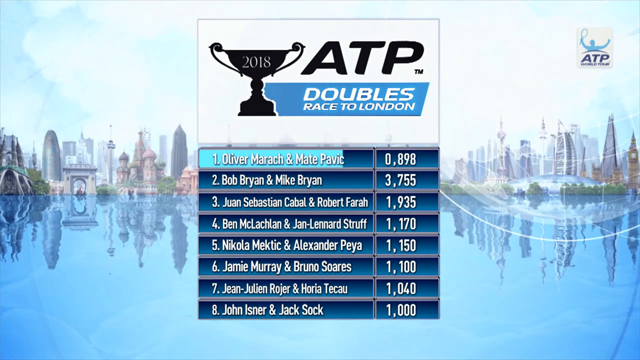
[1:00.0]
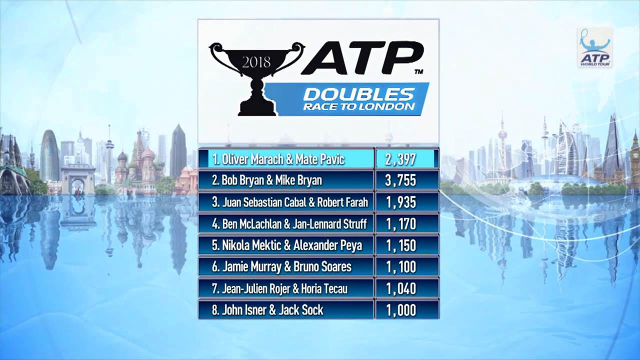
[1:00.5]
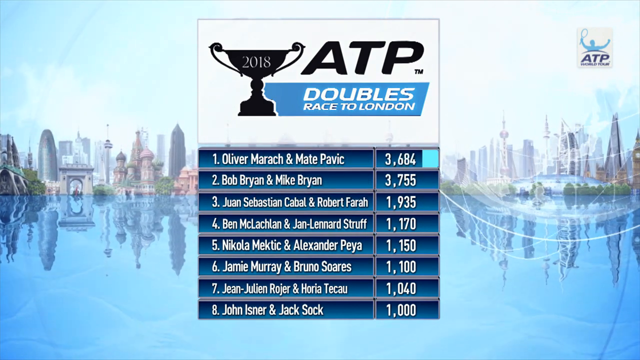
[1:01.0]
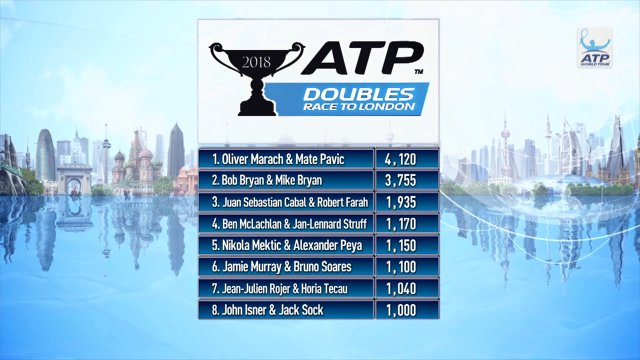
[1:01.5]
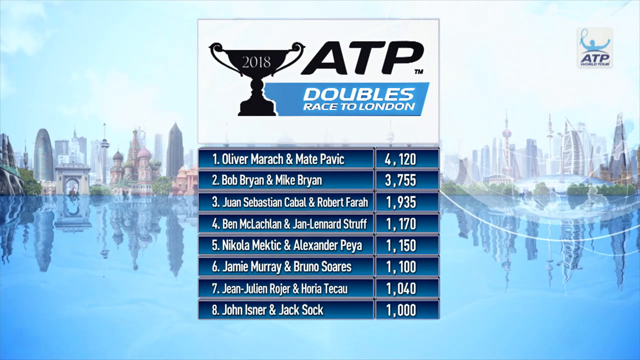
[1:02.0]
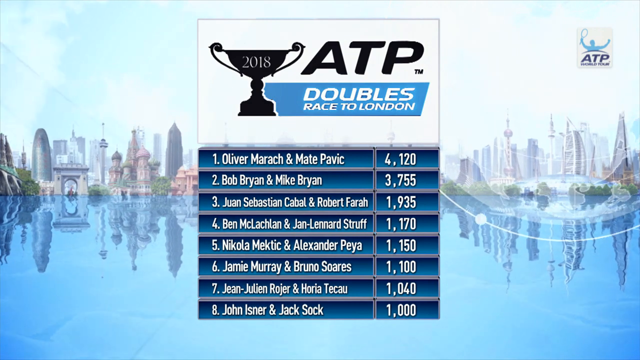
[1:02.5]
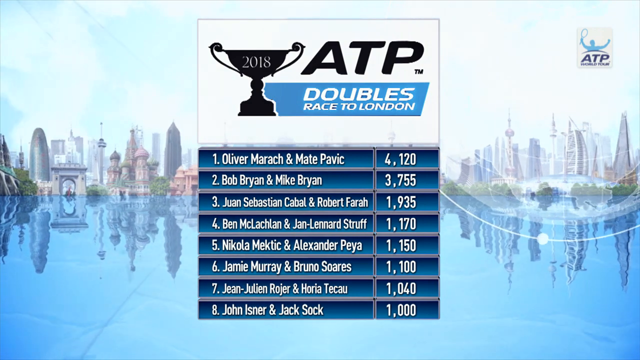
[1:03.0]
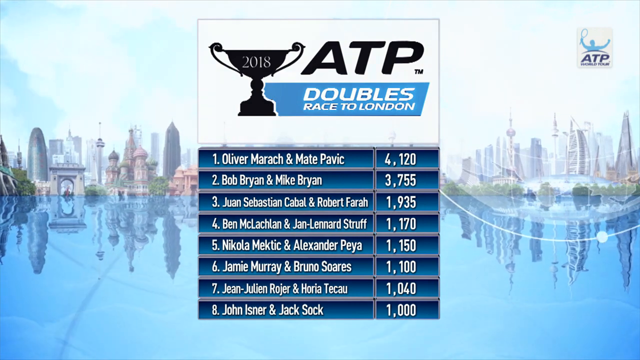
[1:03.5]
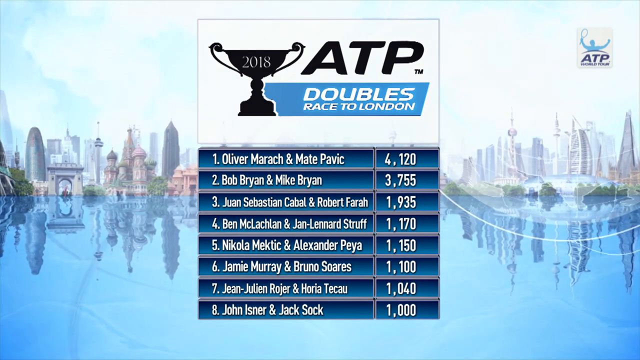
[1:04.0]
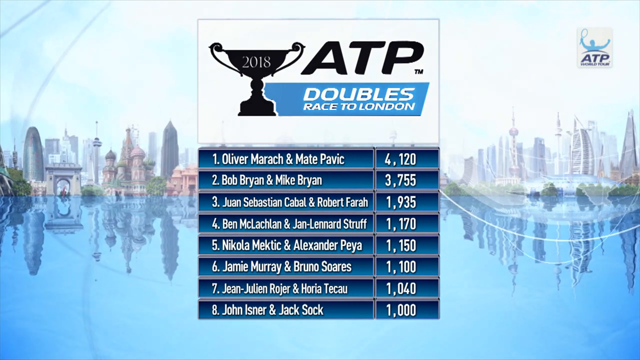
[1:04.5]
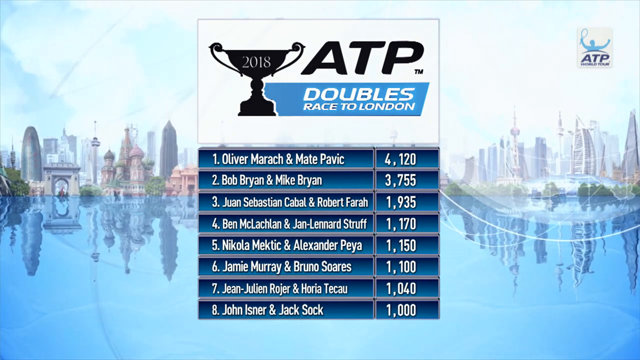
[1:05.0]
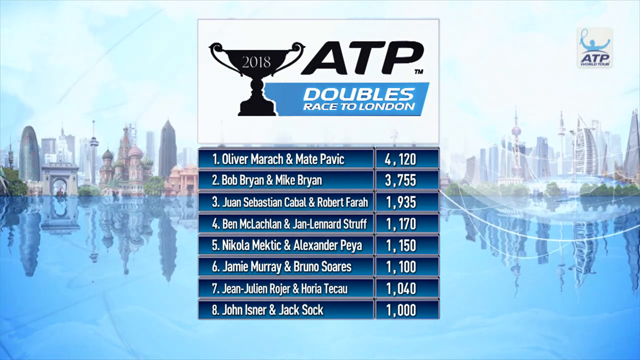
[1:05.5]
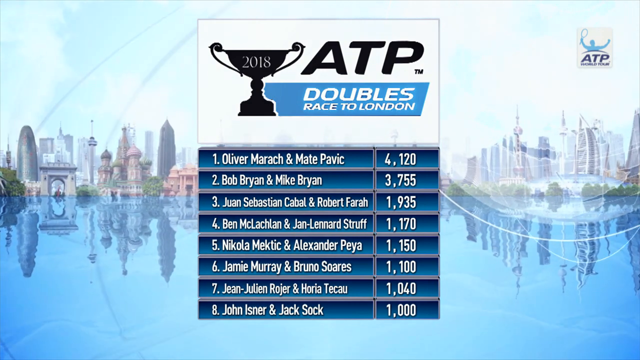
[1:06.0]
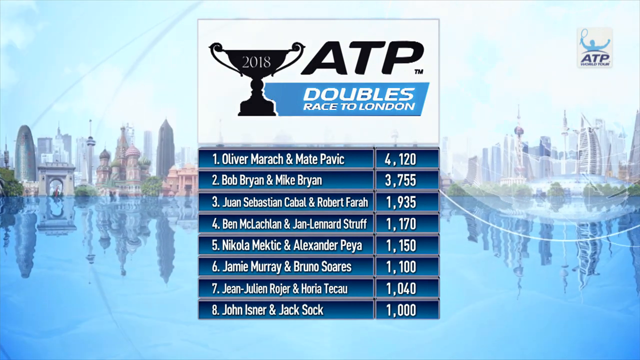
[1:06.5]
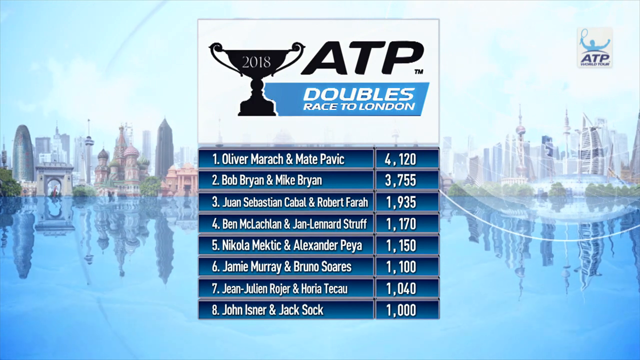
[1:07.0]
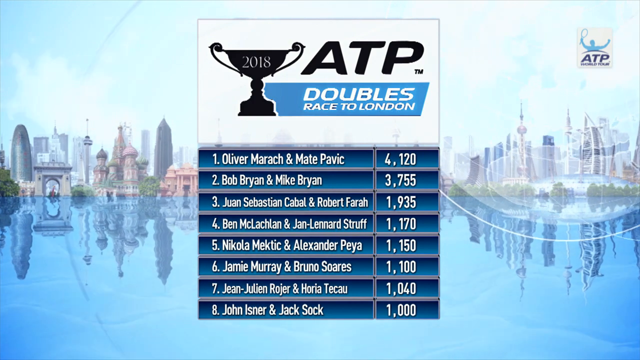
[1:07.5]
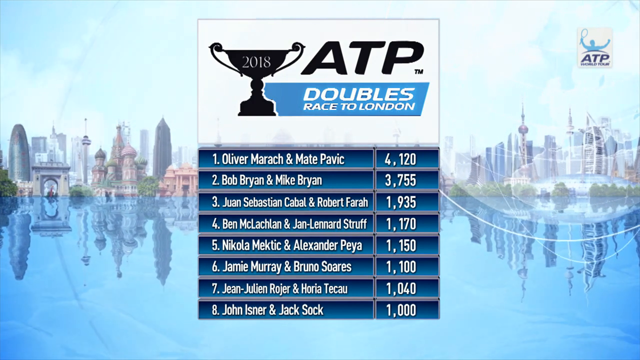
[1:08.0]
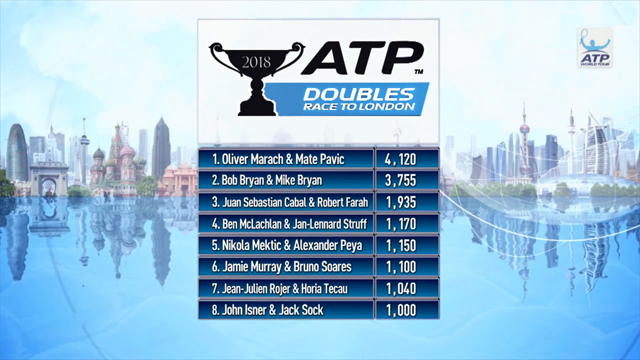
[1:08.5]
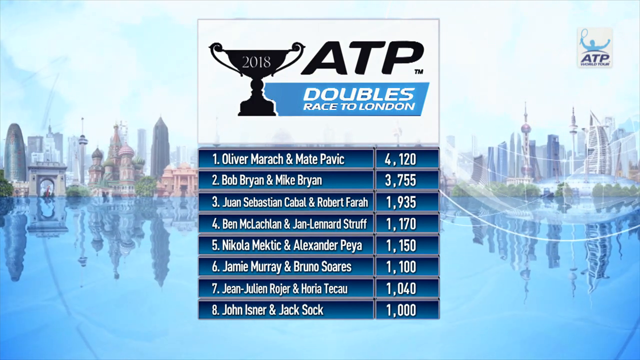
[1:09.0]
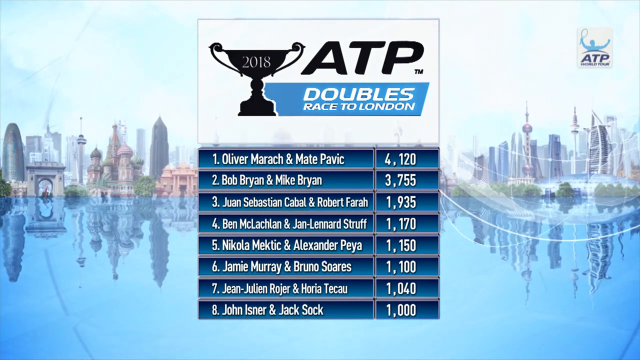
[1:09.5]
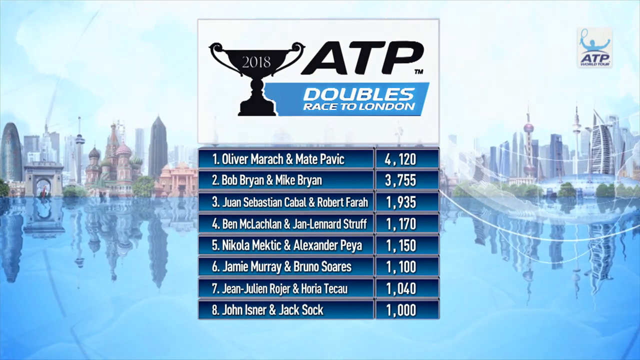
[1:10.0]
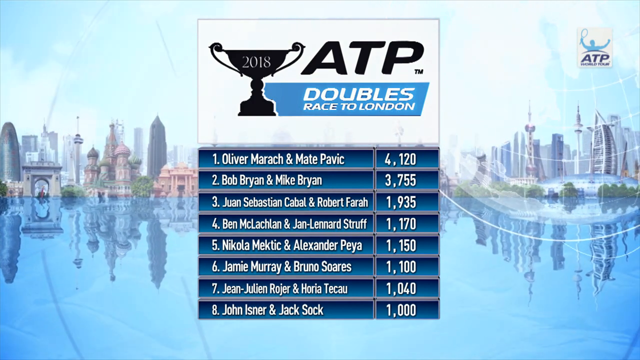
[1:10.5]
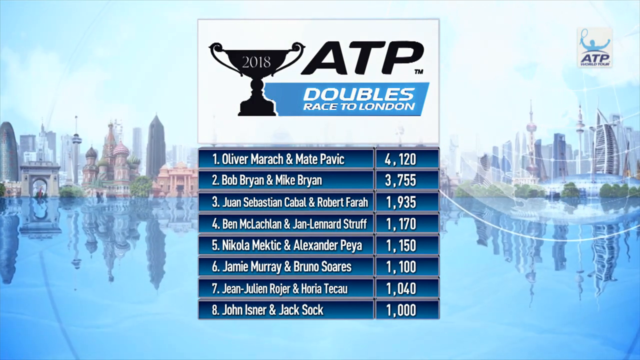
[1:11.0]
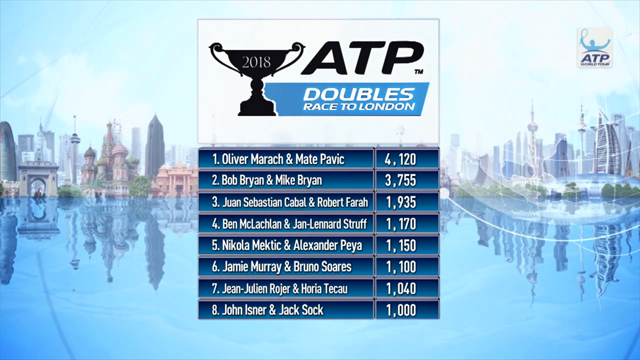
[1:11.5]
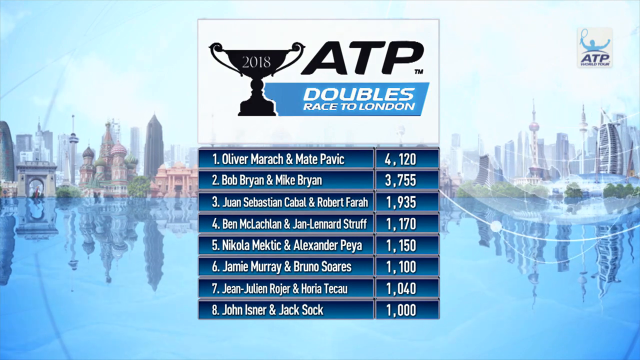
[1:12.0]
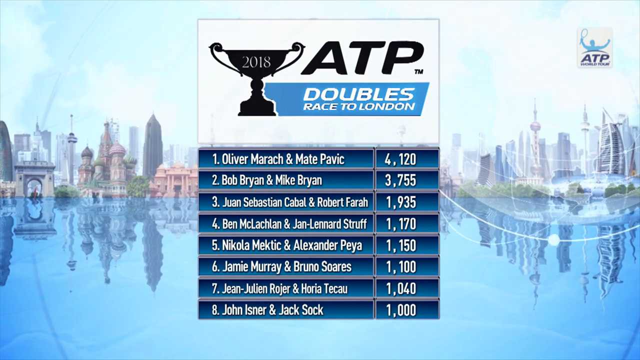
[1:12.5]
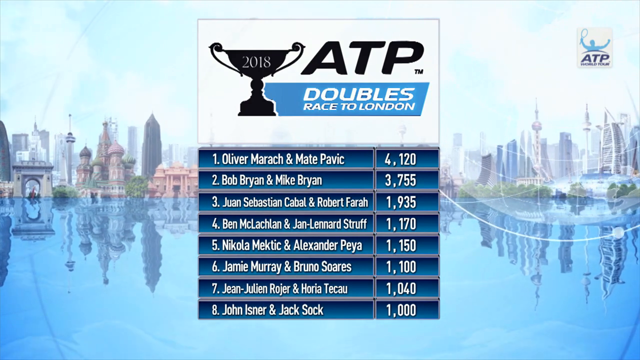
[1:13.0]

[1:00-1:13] The data grid continues to populate. At the top is a black silhouette of a prize cup with 2018 on it; to its right is "ATP tm", and underneath, in white writing within a blue box, "Doubles race to London". There are eight rows of cells underneath, and the top one updates to read in white "1 Oliver Marach and Mate Pavic", with the number next to them increasing to reach 4,120 before coming to a halt. All of the cells are dark blue with white writing. The background is a large expanse of blue water filling the bottom half, and above it on the skyline a montage of famous global landmarks sitting under a blue sky. At the top right of the screen is an ATP logo in white in a white box with a blue silhouette of a tennis player holding his racket aloft in celebration, and to the right of the grid is a faint transparent outline of a rotating globe. Clouds move in the sky in the background.